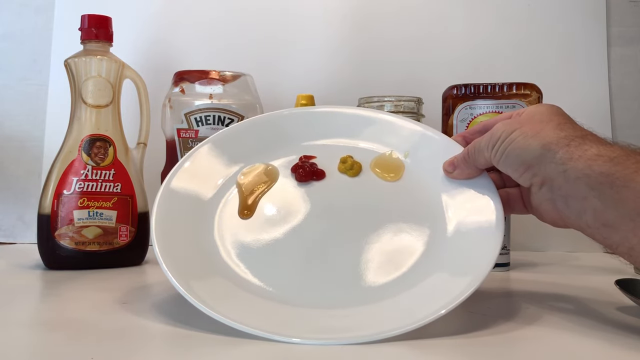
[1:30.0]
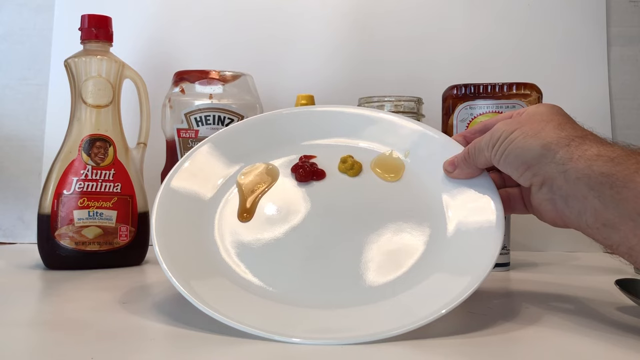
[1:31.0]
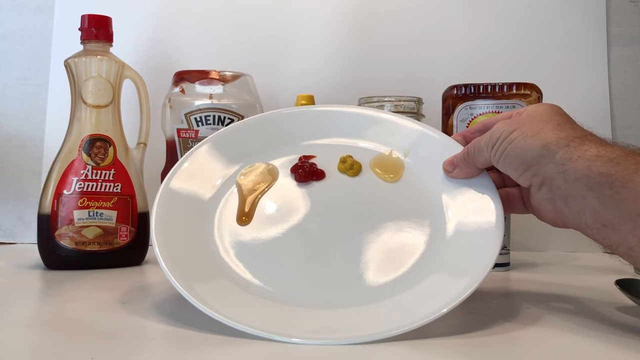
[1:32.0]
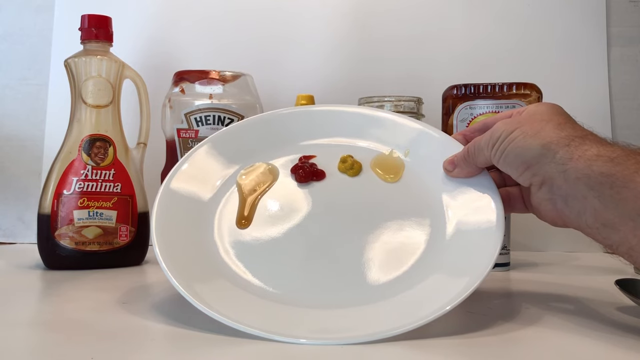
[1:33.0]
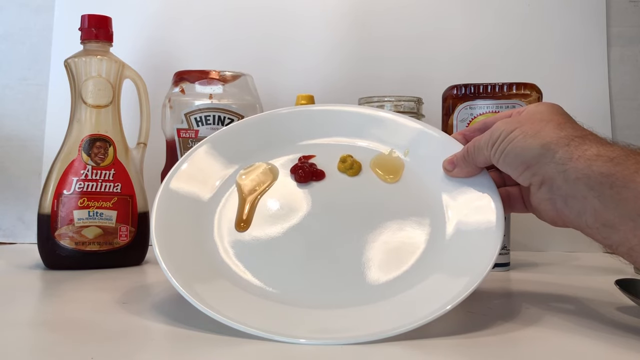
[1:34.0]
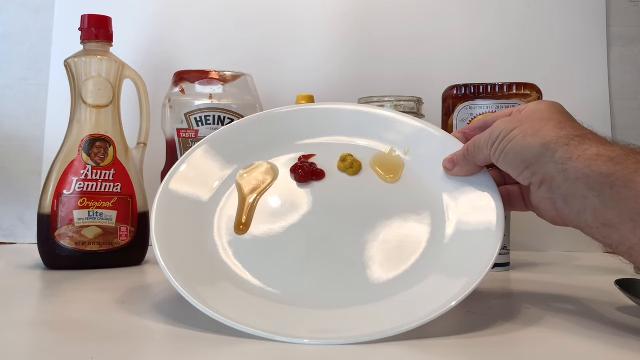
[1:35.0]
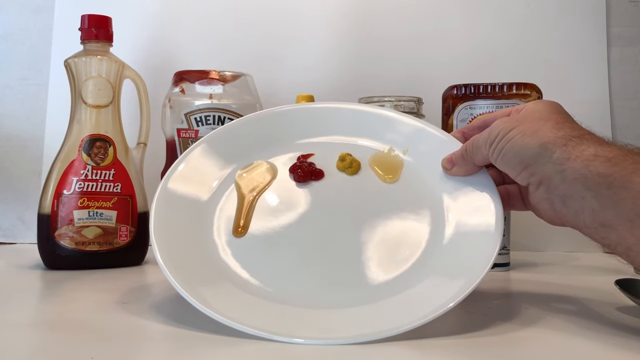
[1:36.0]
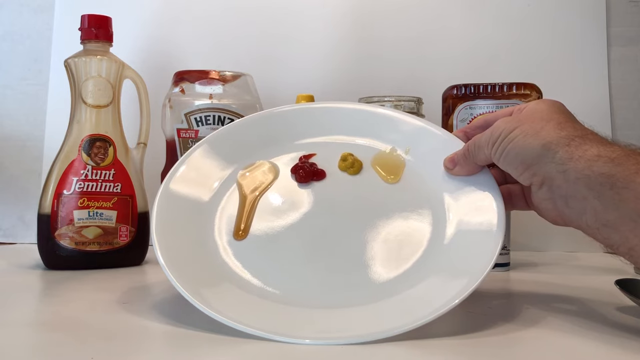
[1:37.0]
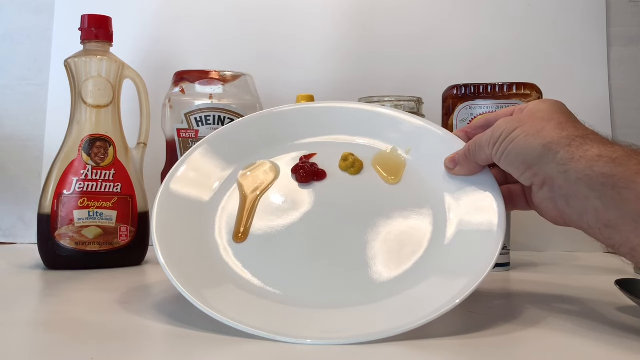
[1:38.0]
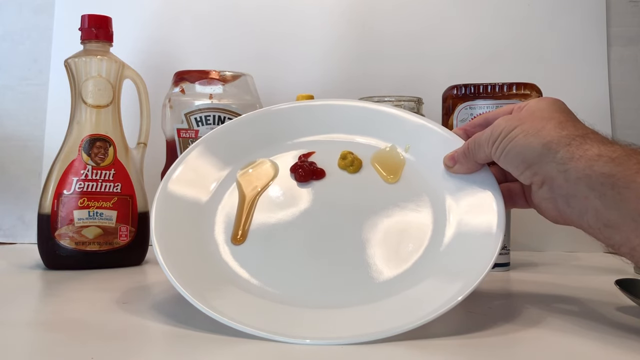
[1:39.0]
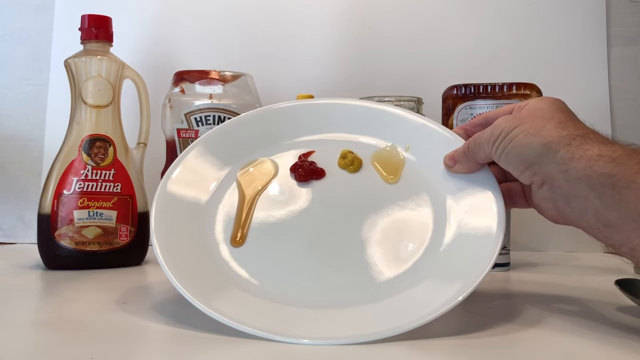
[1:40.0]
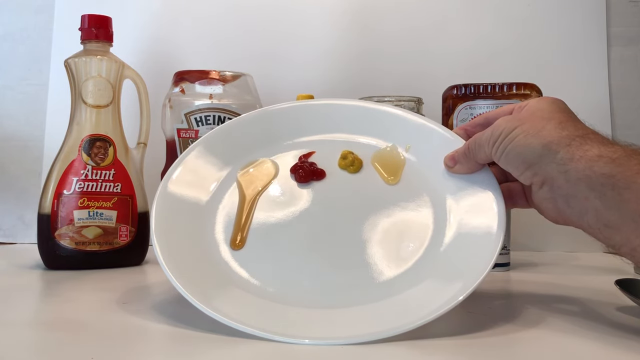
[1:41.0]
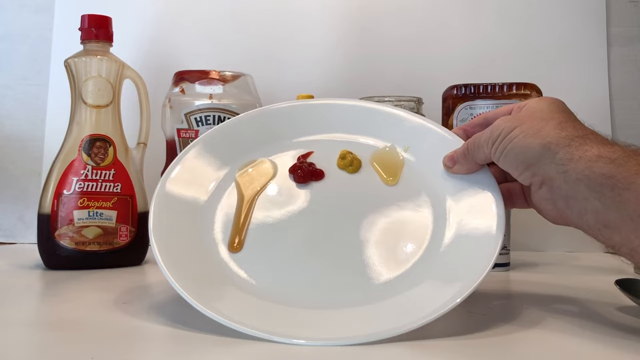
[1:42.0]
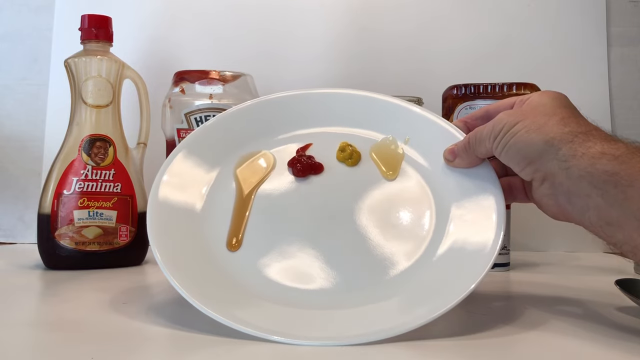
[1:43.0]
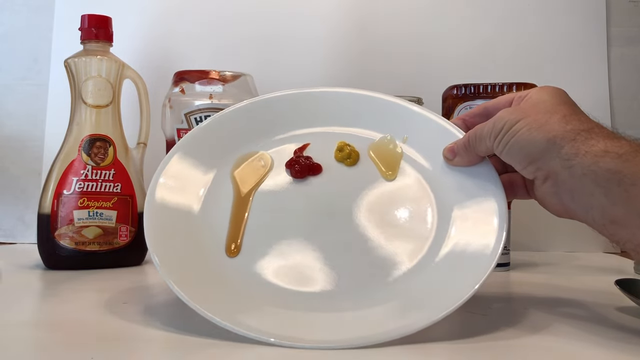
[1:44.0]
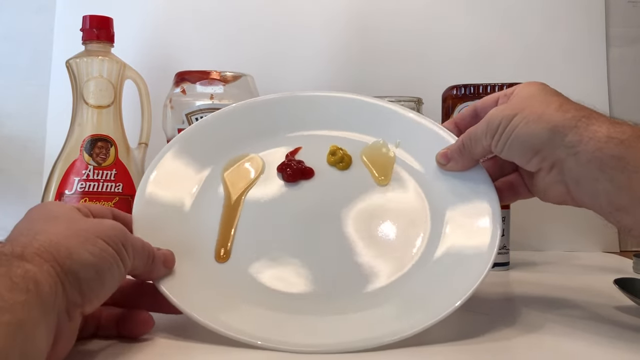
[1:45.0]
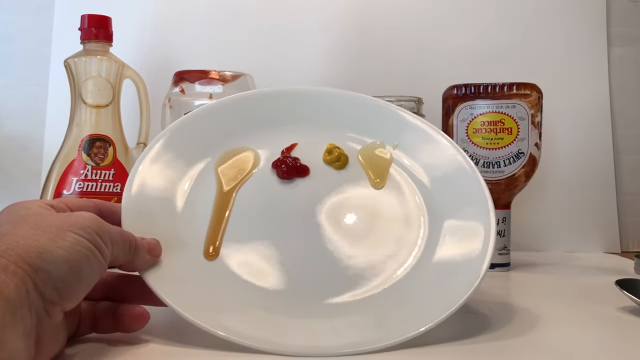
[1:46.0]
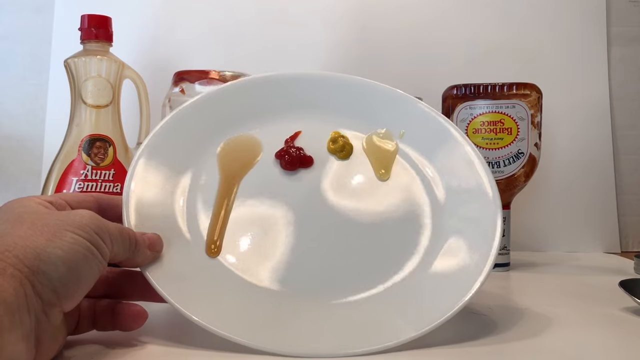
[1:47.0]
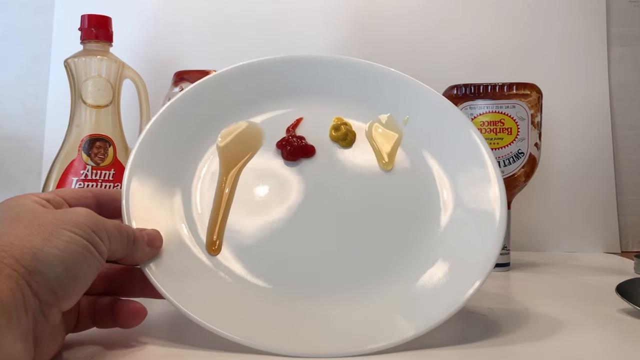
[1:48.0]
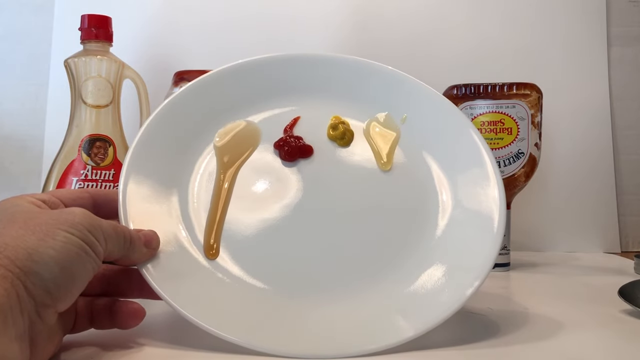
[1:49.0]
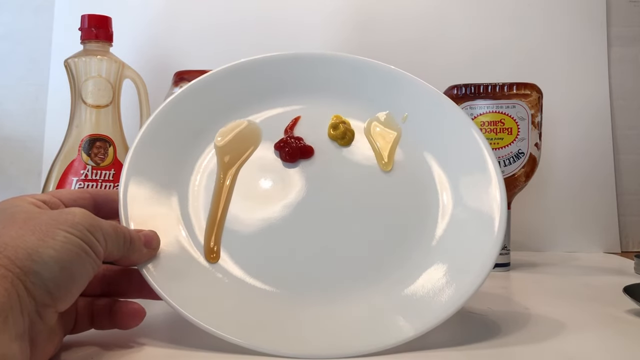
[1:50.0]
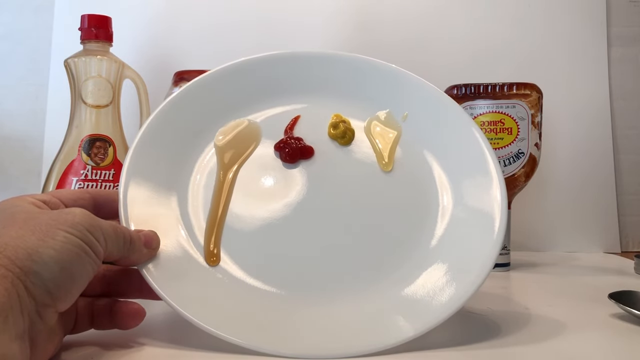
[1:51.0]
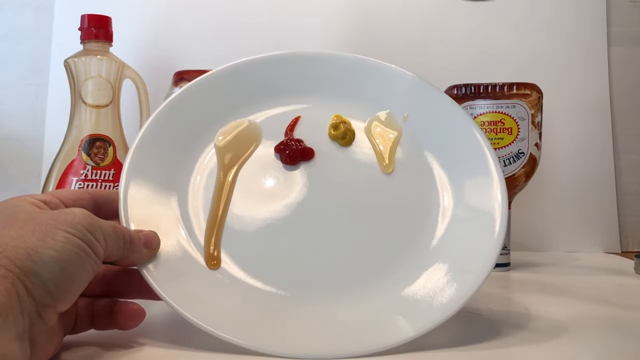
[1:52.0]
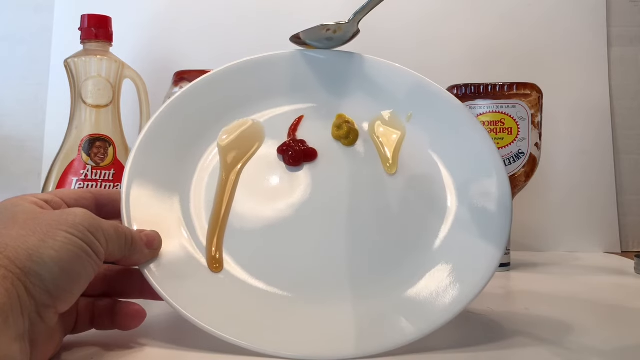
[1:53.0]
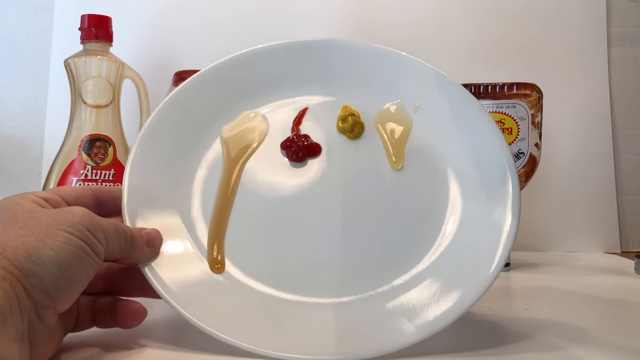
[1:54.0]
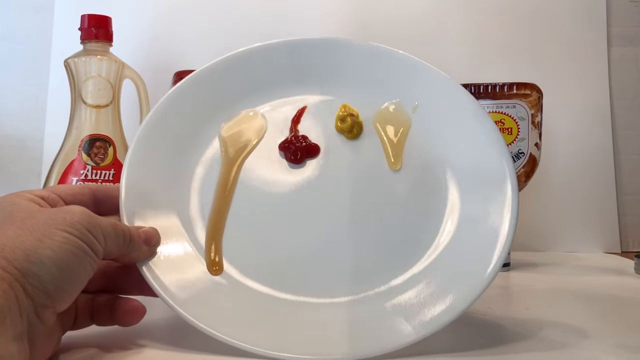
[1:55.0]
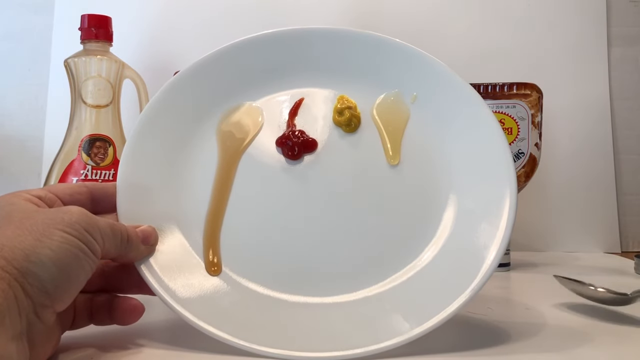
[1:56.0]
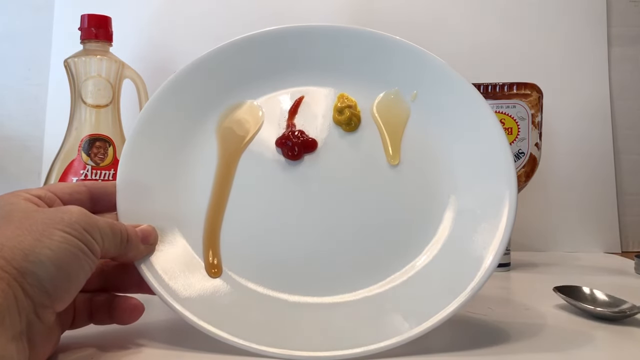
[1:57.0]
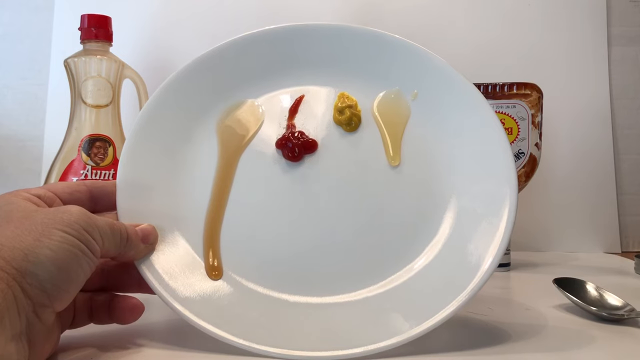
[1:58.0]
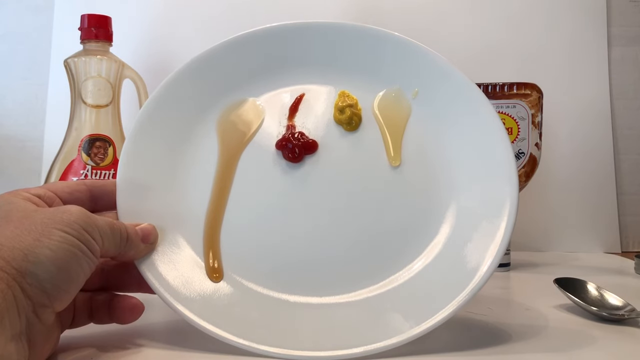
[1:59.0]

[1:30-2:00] The man holds the white plate up with his right hand. The plate covers most of the mustard and most of the mason jar, and his hand covers most of the barbecue sauce; some of the Heinz ketchup is covered, but none of the syrup. On the plate, from left to right, are mustard and honey. The syrup is already starting to drip, while the ketchup and the mustard are not dripping, and the honey is starting to drip a little. Holding the plate up with his right hand, he is kind of shaking and moving it slightly so the condiments can move. He grabs the plate with his left hand. The syrup is in the lead and the honey is moving. He taps the top of the white plate with a silver spoon.